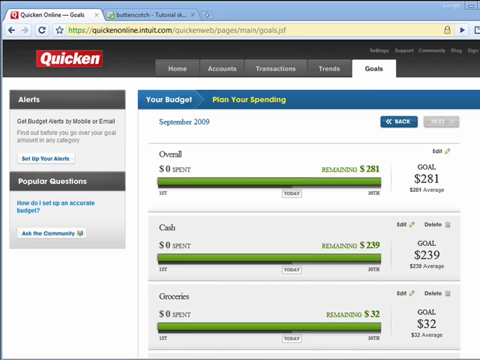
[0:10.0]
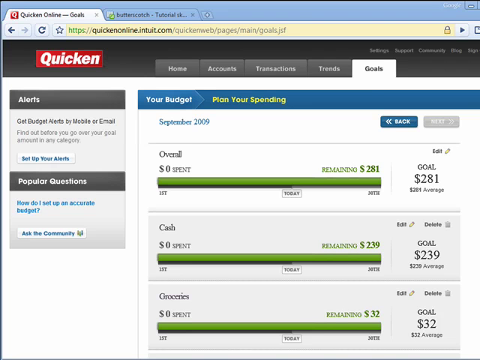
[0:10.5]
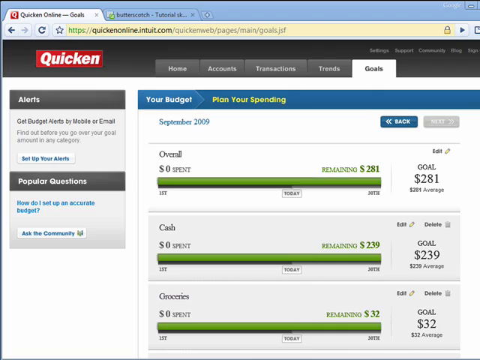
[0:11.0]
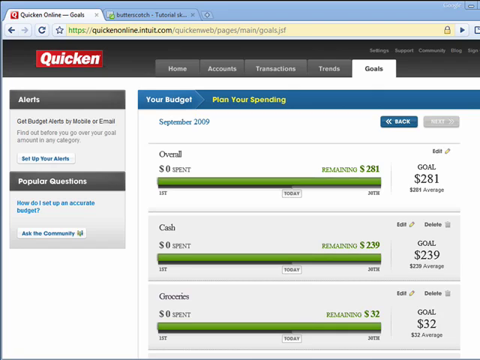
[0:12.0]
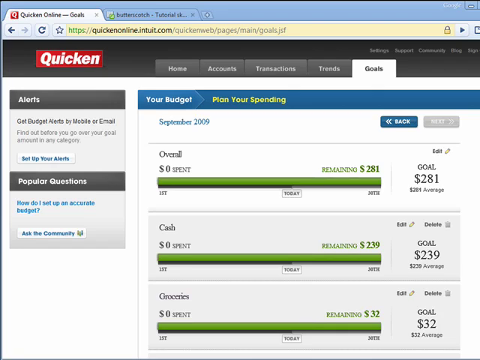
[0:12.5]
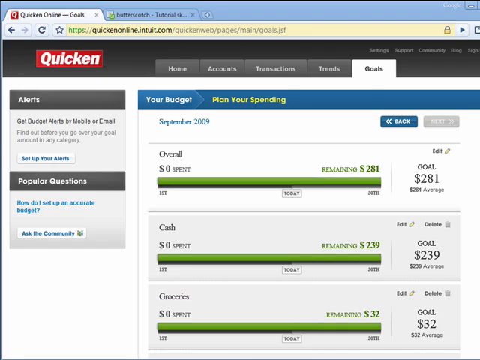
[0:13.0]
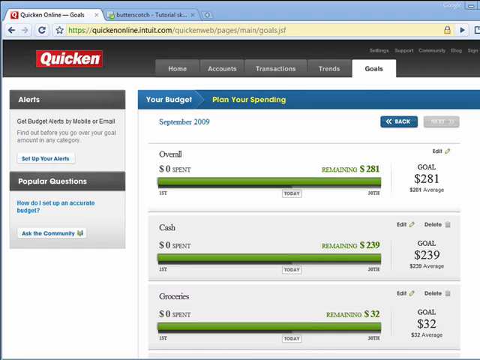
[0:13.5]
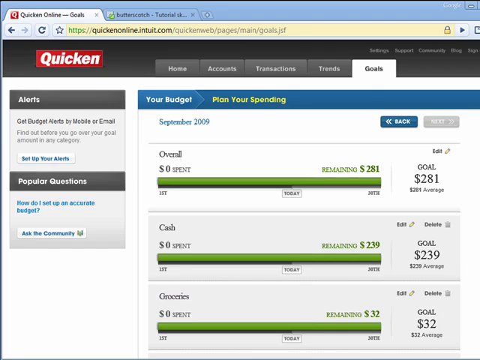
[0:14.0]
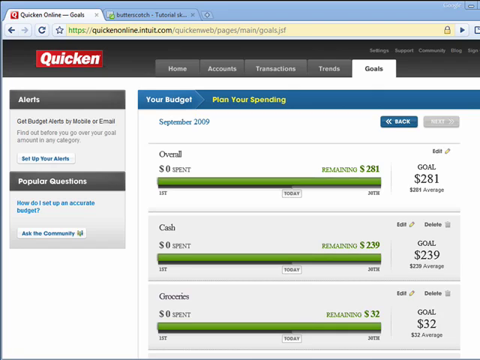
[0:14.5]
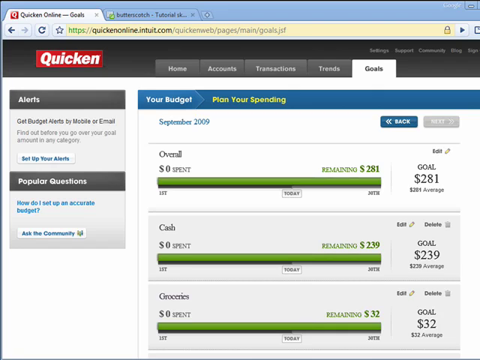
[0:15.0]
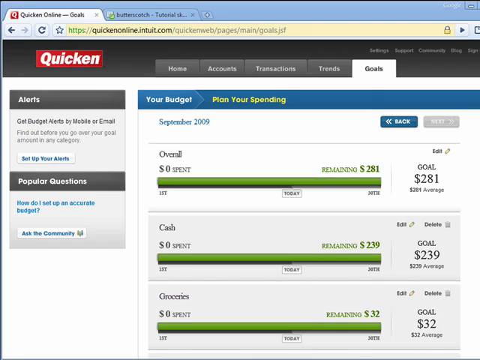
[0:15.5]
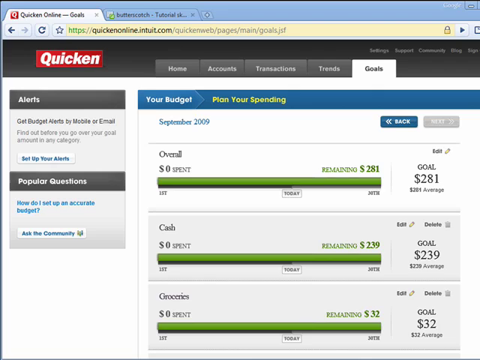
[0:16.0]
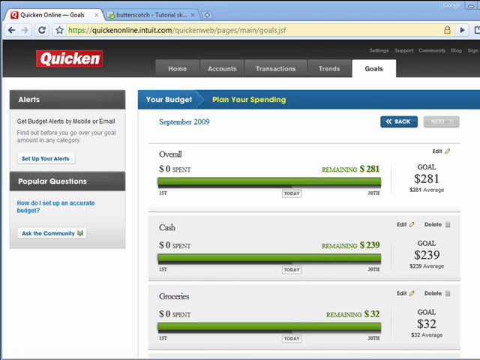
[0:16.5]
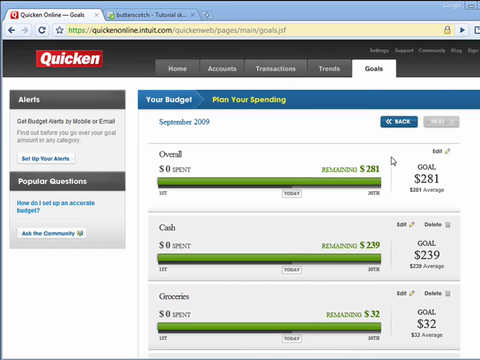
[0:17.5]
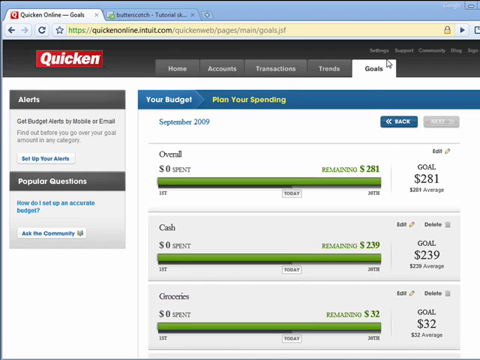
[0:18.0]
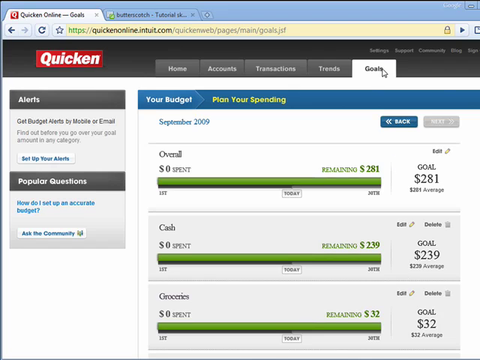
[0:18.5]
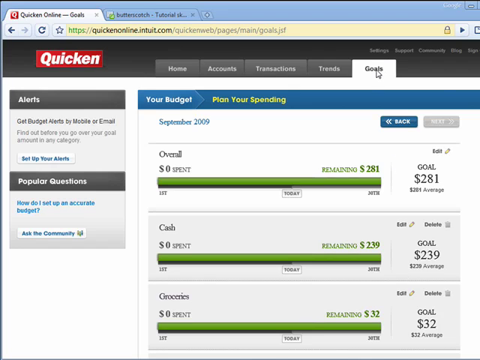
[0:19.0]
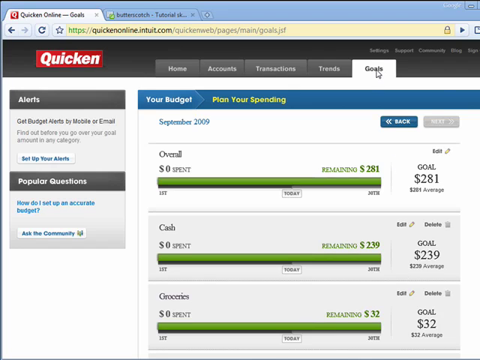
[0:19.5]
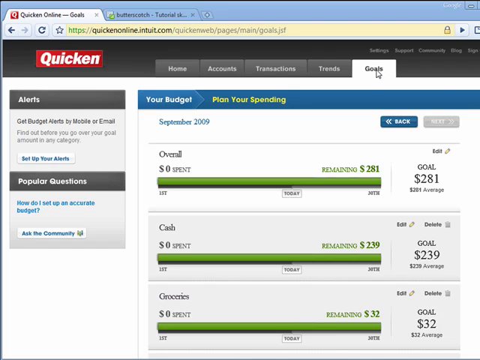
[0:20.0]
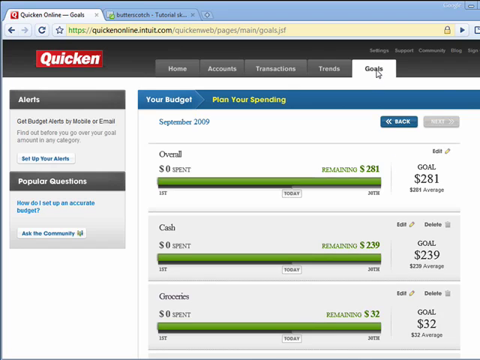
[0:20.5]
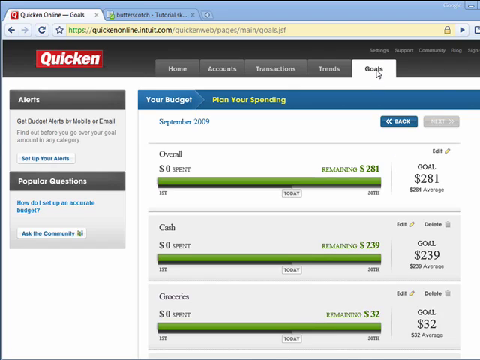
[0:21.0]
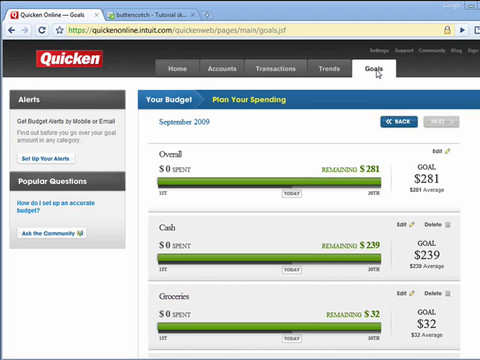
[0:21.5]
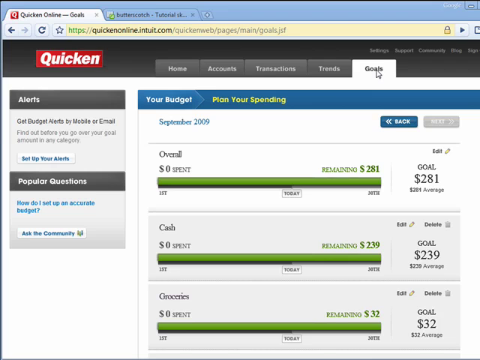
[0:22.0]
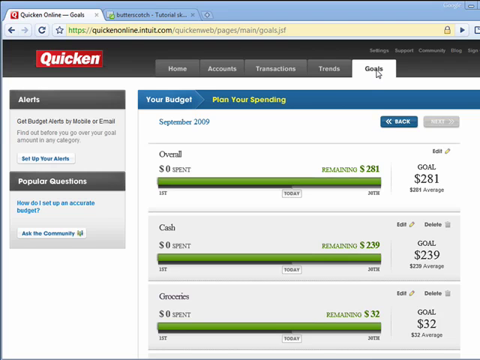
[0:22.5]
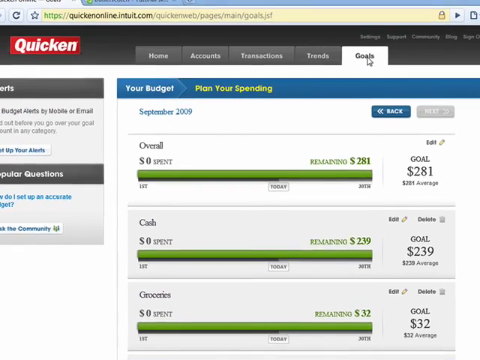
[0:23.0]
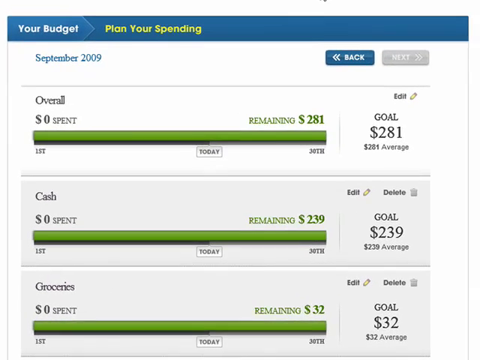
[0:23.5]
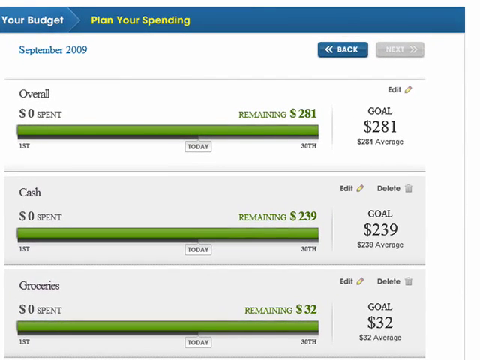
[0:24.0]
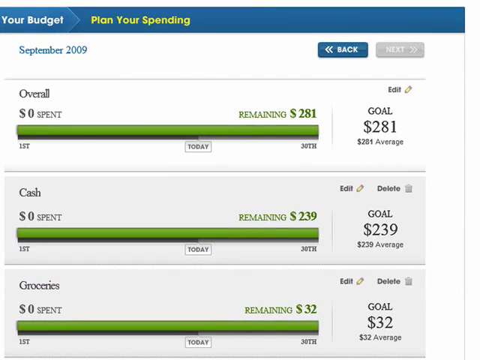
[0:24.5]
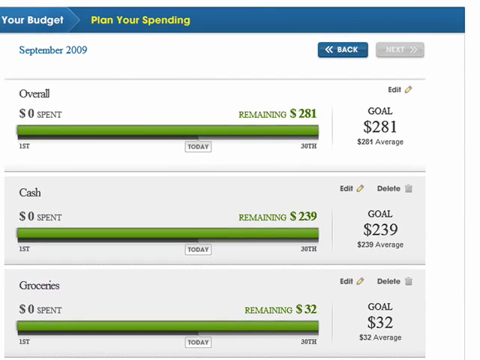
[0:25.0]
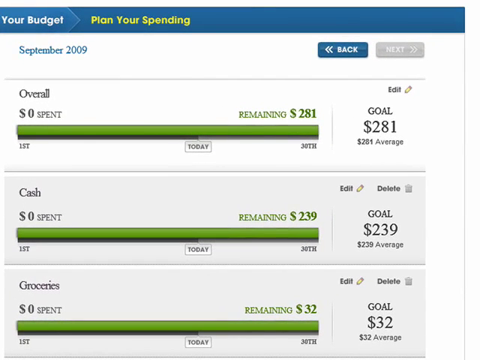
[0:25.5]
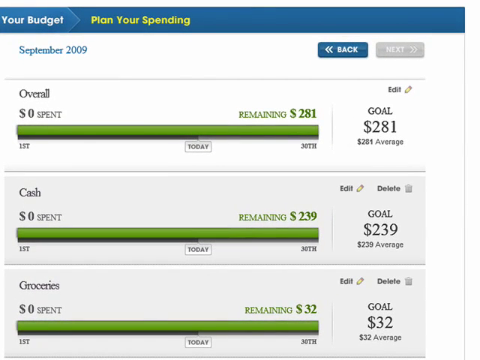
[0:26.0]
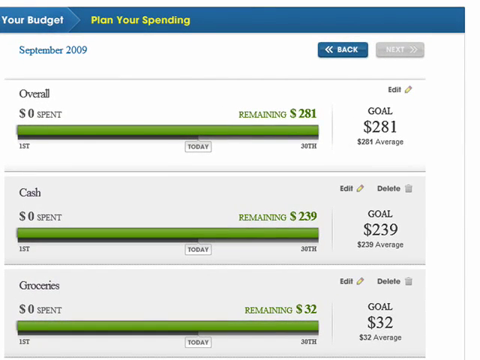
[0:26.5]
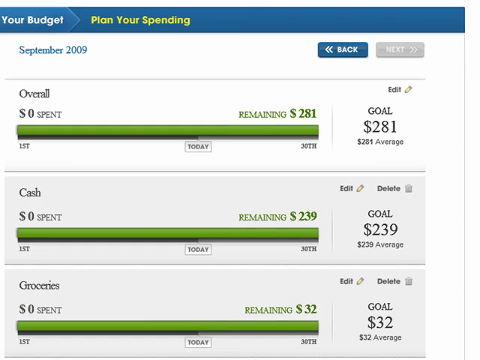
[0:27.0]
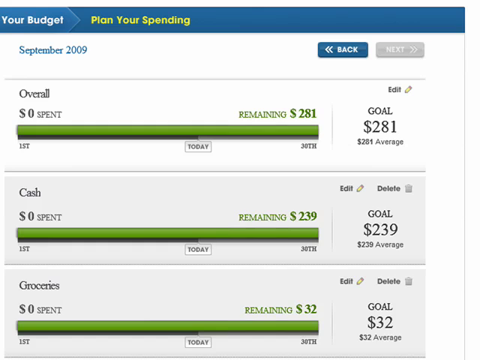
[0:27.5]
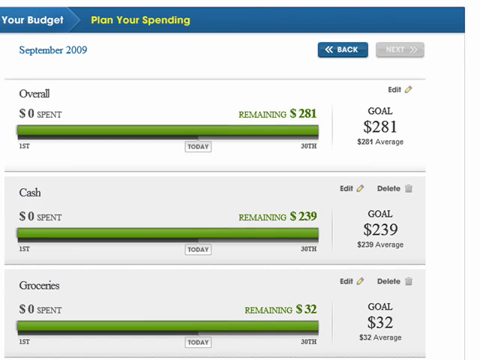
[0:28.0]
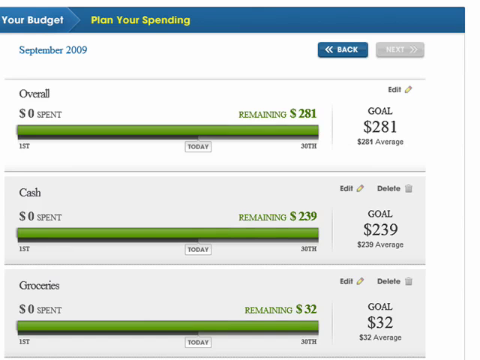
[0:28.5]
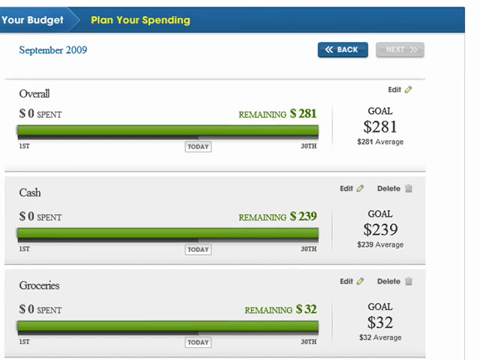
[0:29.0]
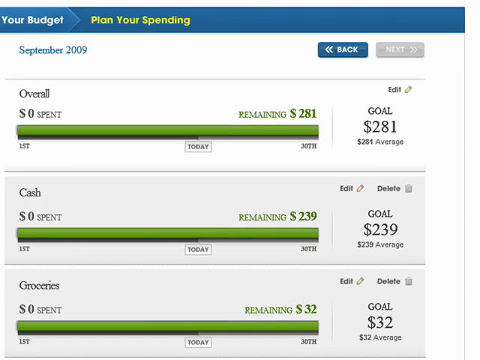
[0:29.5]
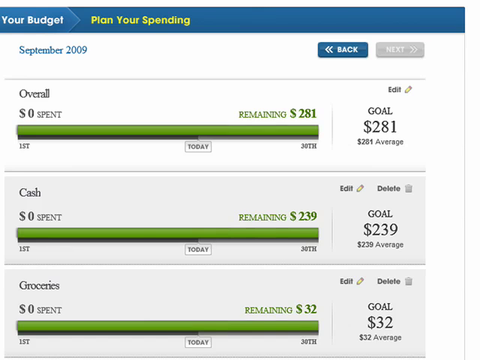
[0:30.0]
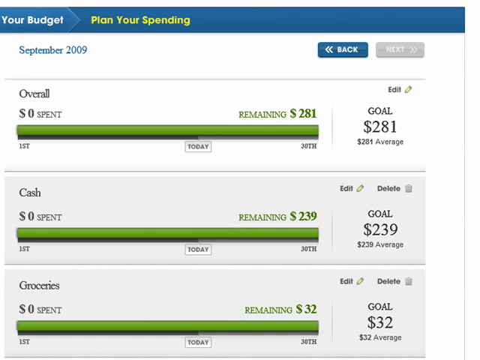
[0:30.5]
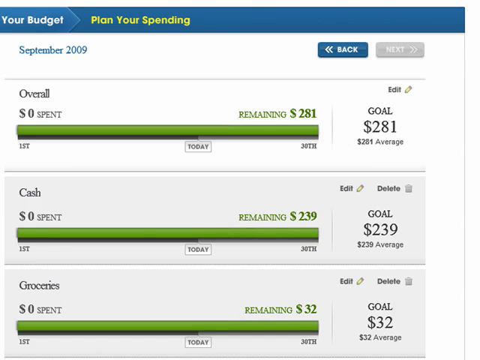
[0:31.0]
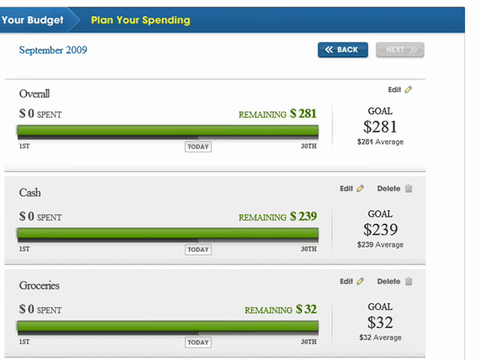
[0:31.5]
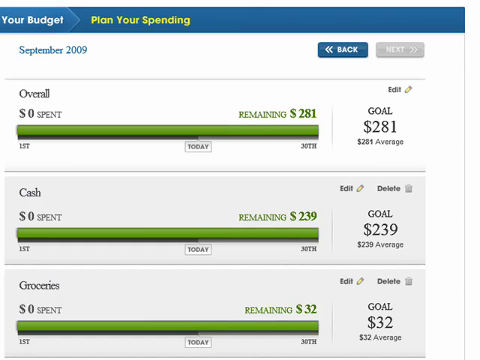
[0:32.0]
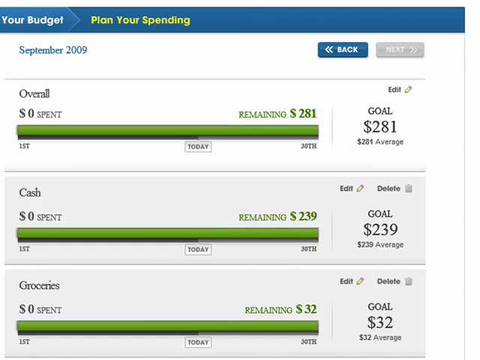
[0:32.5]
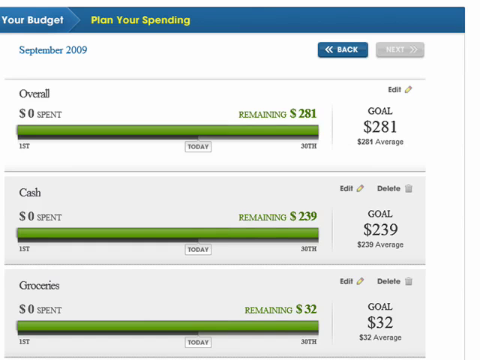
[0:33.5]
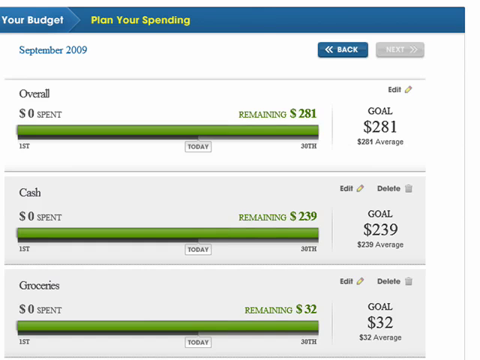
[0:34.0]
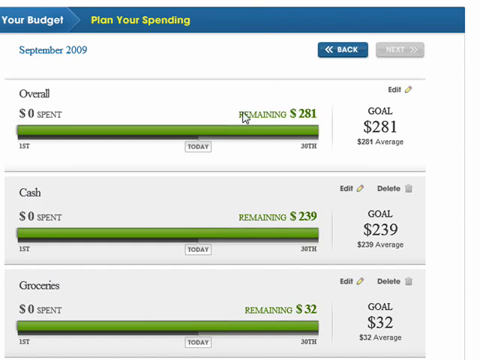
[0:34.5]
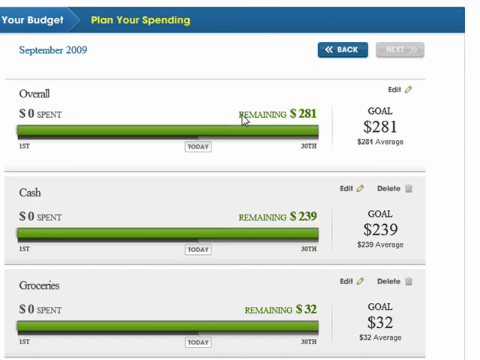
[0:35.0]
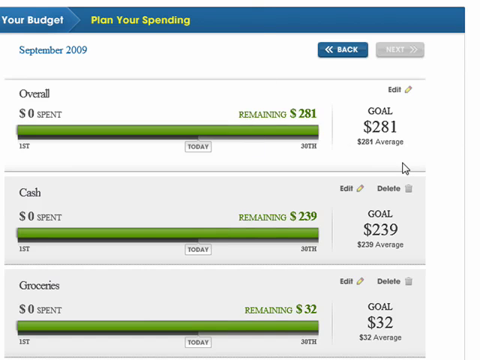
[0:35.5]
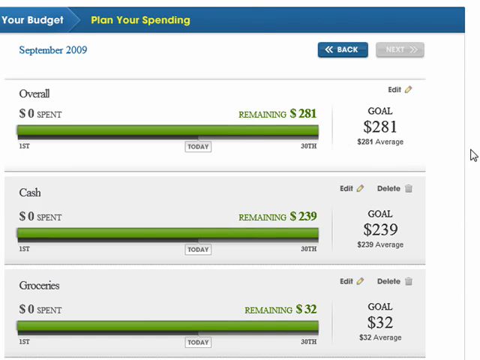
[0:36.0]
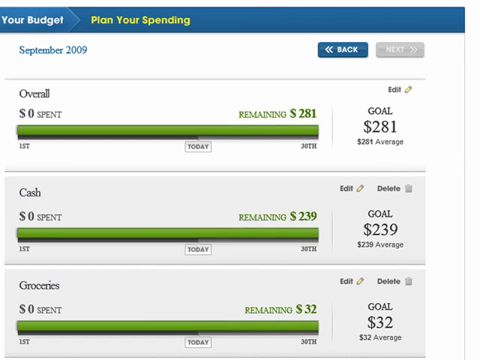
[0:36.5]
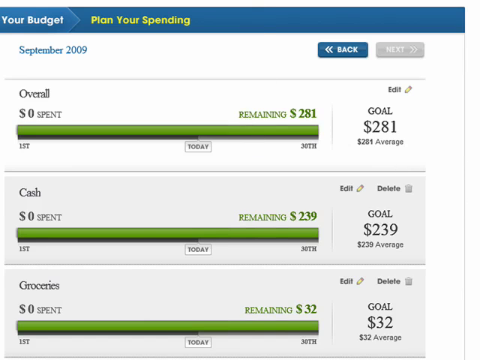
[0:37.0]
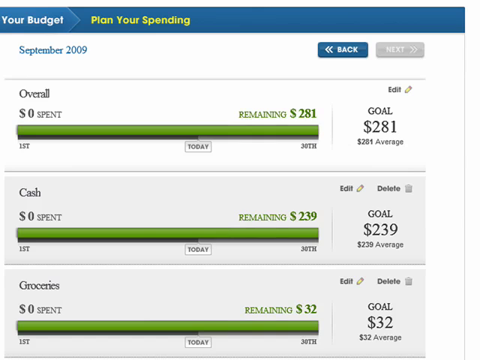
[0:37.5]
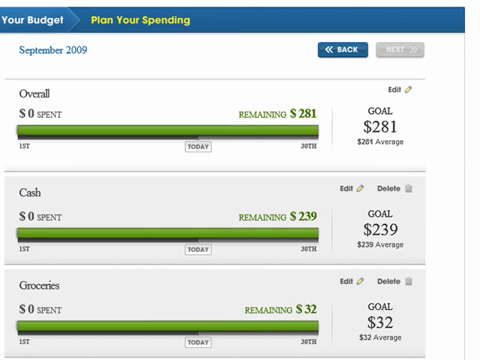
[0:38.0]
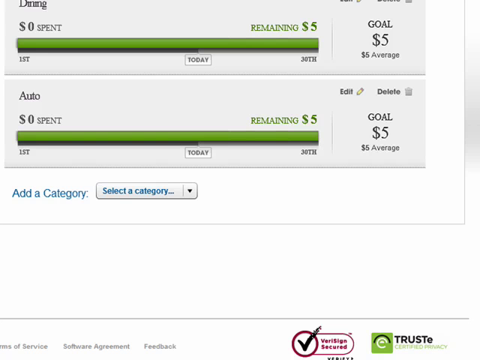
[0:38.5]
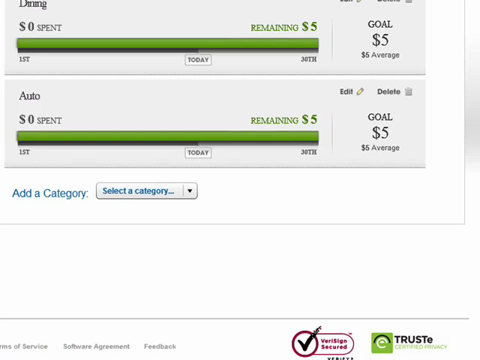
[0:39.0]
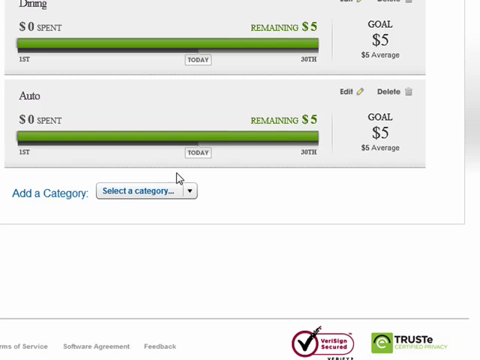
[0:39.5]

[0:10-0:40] A website called Quicken is shown, with five tabs from left to right: Home, Accounts, Transactions, Trends, and Goals. It looks like possibly a financial website. The current tab is Goals, showing "your budget" in white text on a blue background and "plan your spending" in gold text on a blue background, with "September 2009" below. There appear to be three categories: Overall, Cash, and Groceries. Two labels read "Spent" and "Remaining", and on the right-hand side are "your Goal" and, below it, "your Average". The user zooms in on this section. The top category's goal is $281, the middle one's is $239, and the bottom one's is $32. Each section has edit and delete options, except the top section, which cannot be deleted.